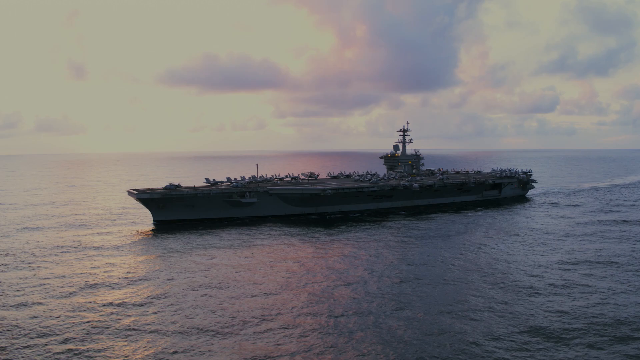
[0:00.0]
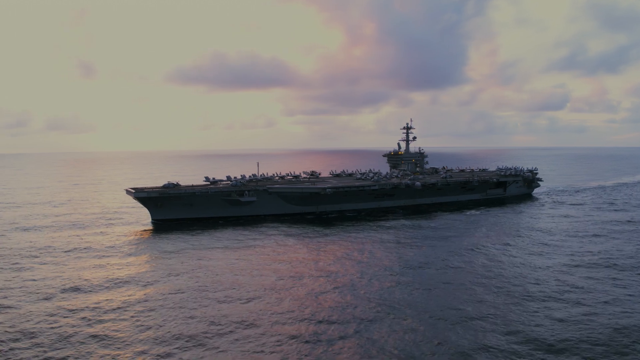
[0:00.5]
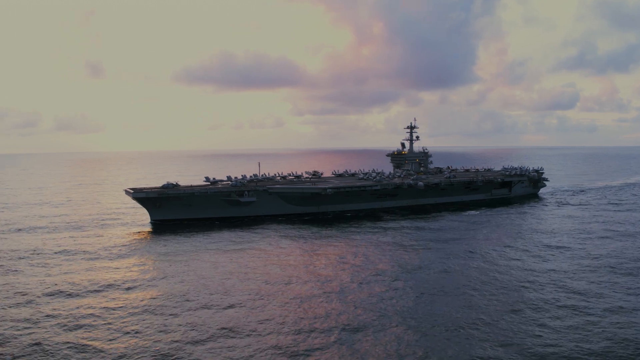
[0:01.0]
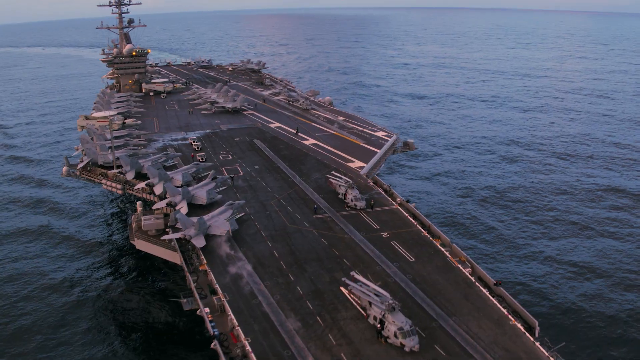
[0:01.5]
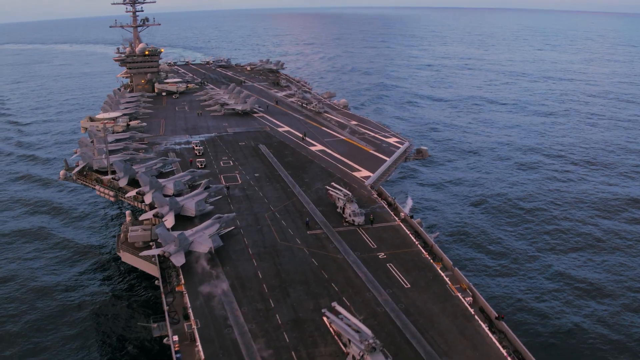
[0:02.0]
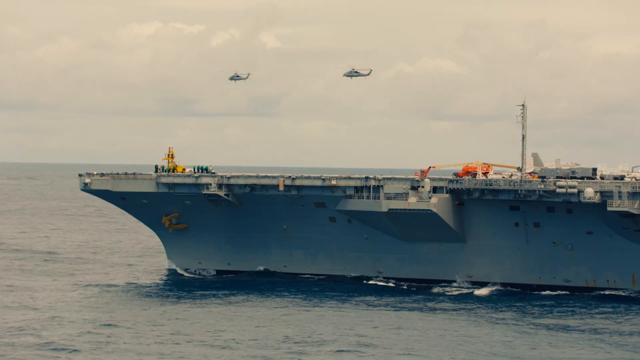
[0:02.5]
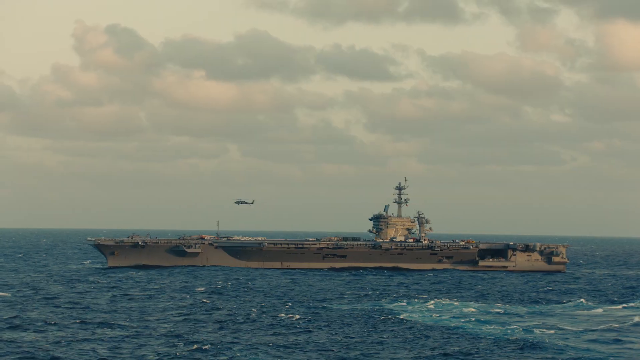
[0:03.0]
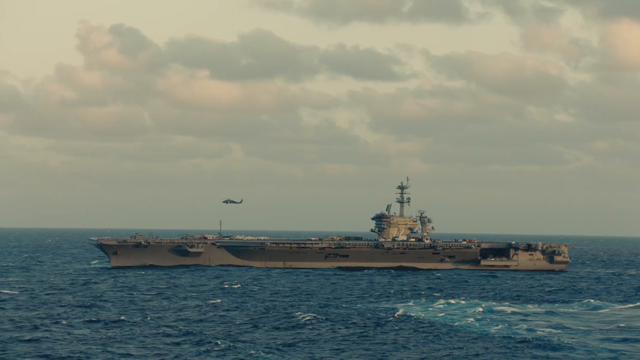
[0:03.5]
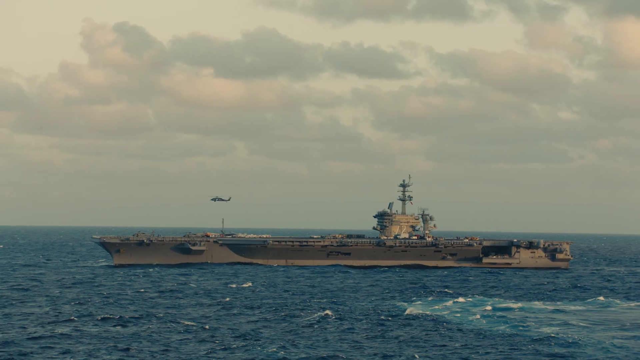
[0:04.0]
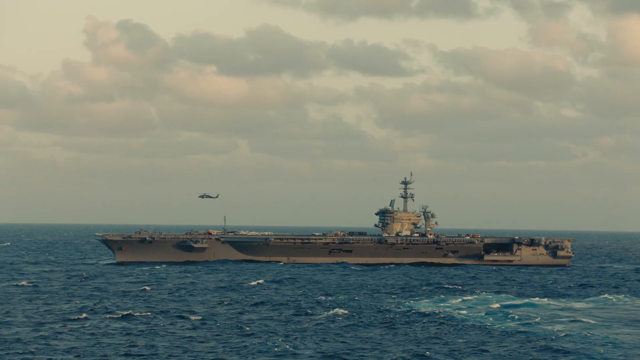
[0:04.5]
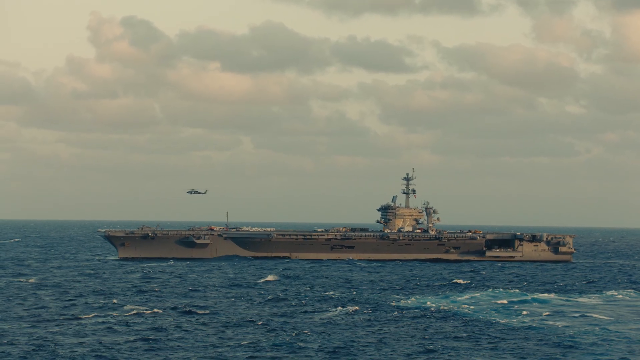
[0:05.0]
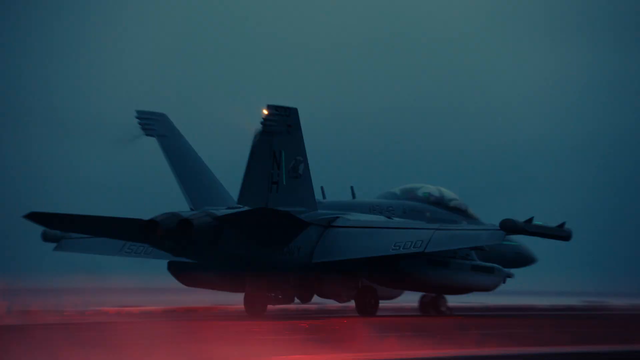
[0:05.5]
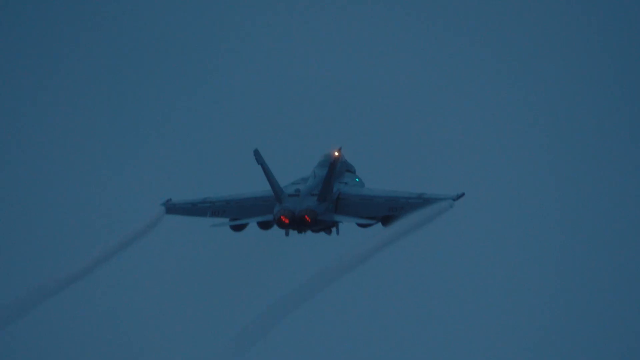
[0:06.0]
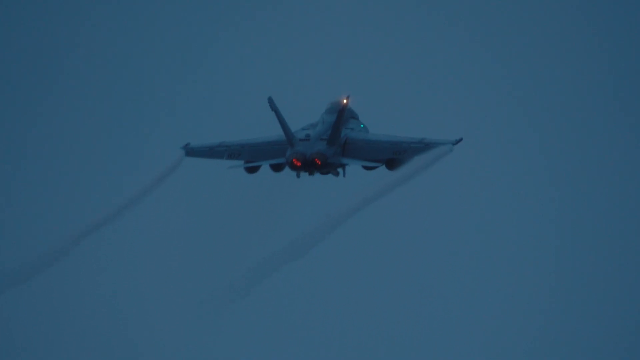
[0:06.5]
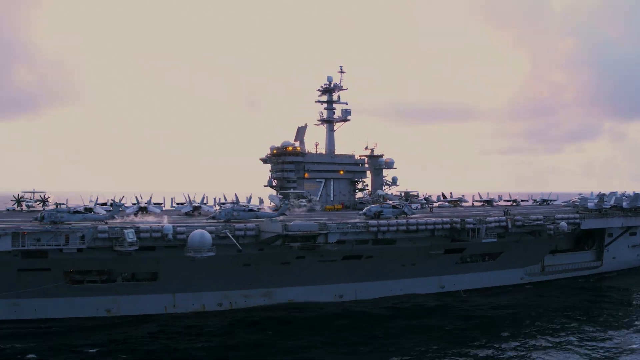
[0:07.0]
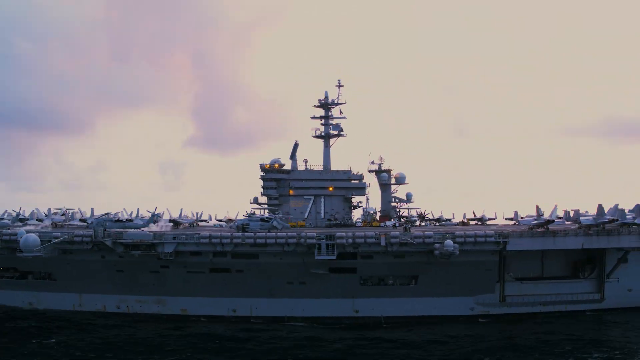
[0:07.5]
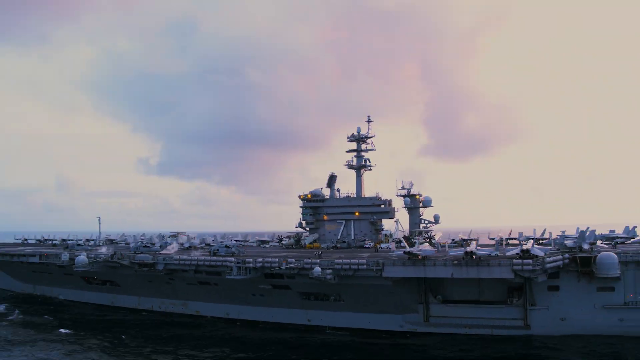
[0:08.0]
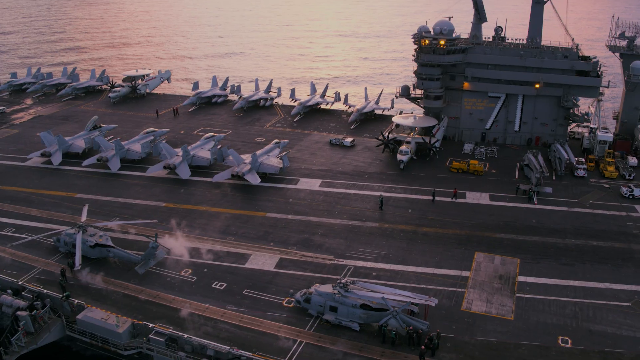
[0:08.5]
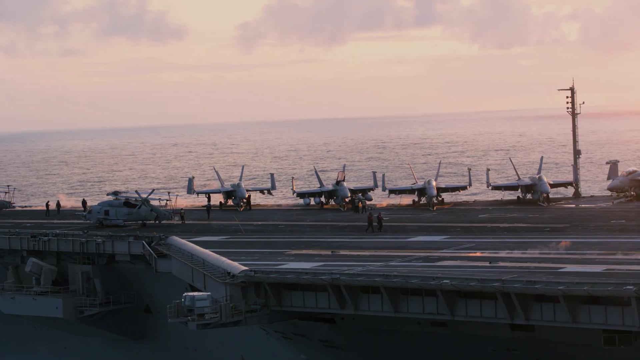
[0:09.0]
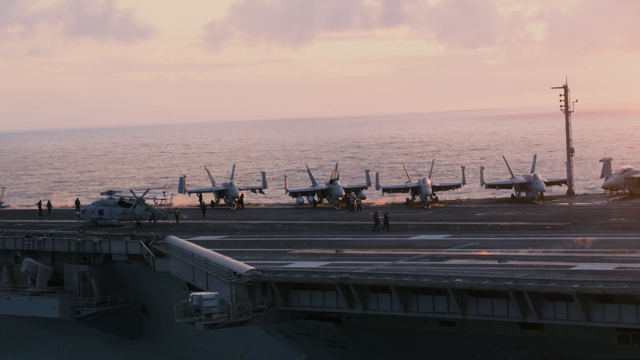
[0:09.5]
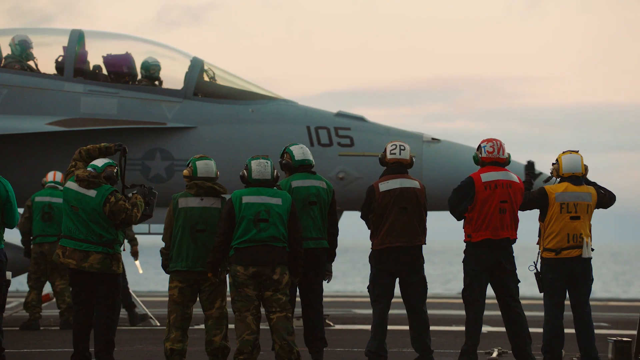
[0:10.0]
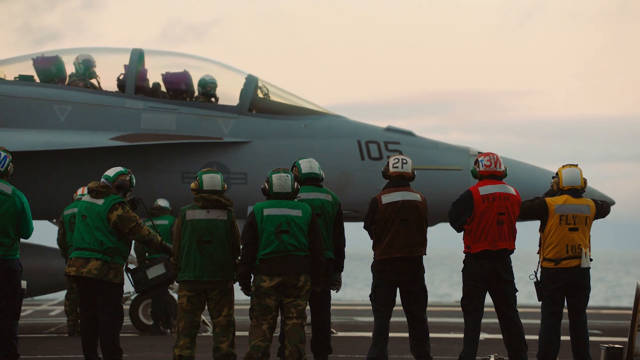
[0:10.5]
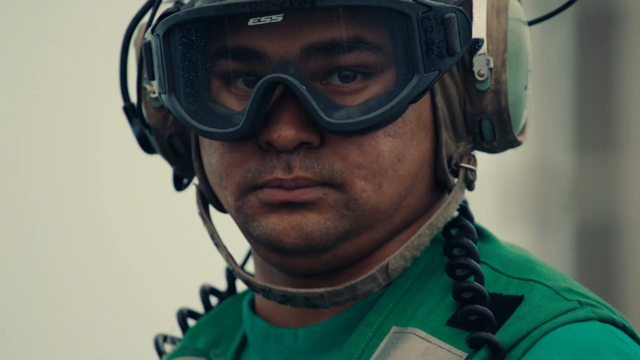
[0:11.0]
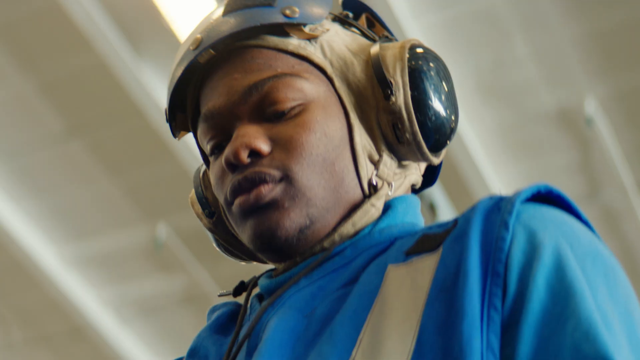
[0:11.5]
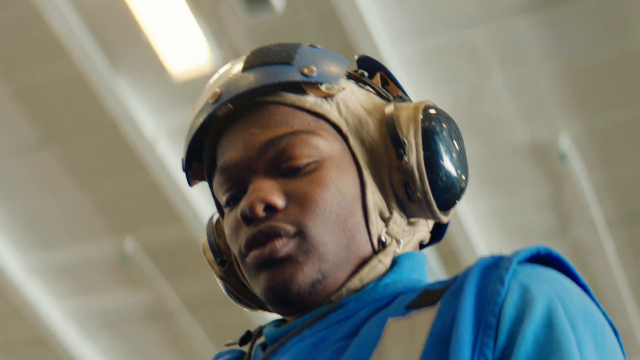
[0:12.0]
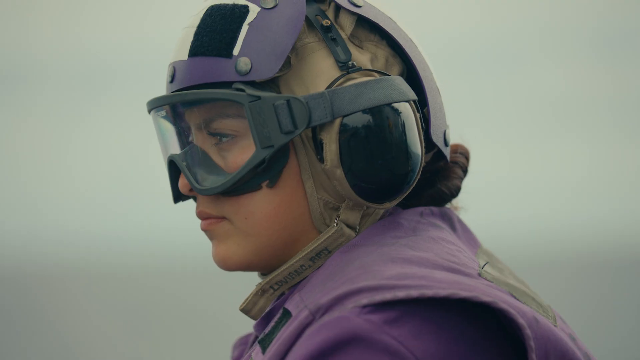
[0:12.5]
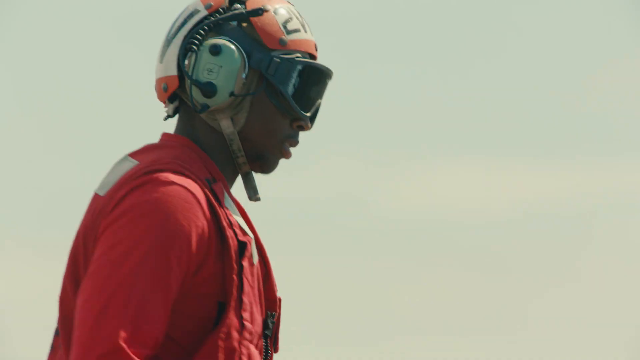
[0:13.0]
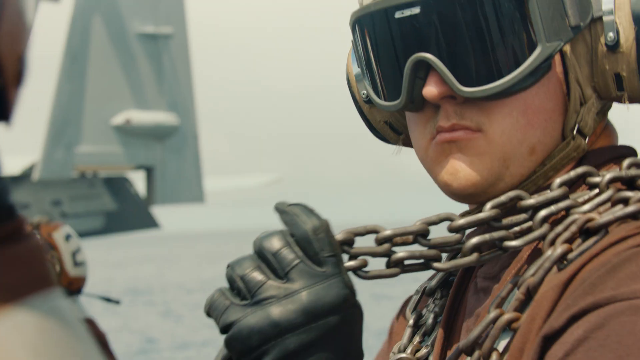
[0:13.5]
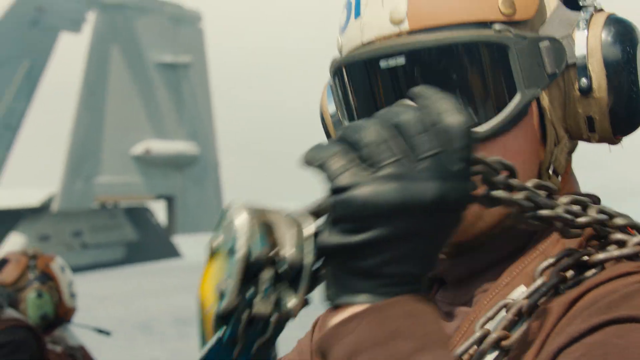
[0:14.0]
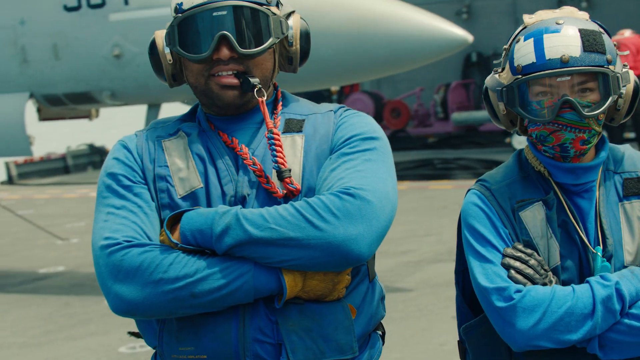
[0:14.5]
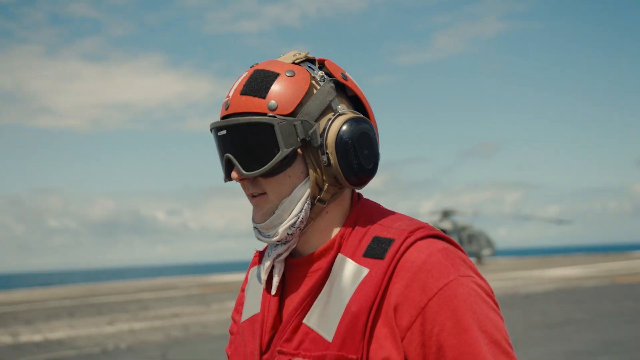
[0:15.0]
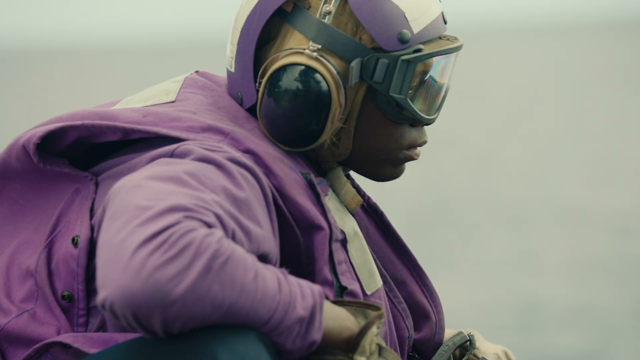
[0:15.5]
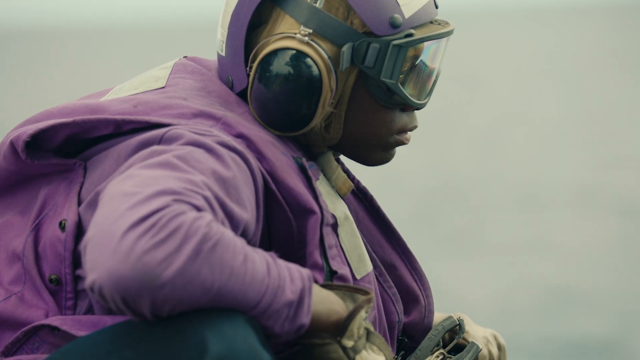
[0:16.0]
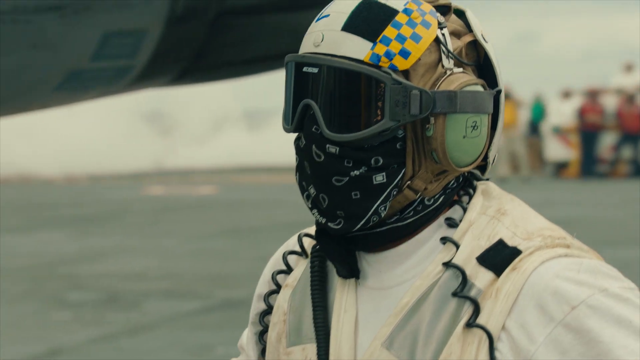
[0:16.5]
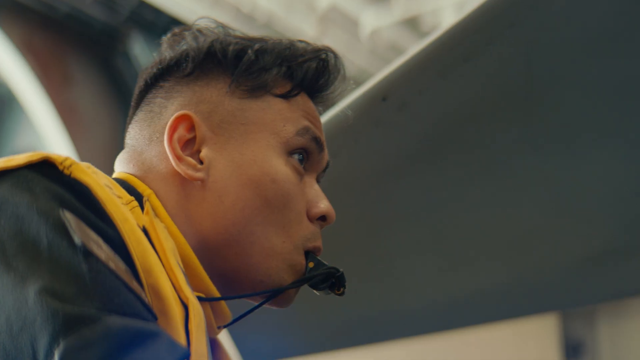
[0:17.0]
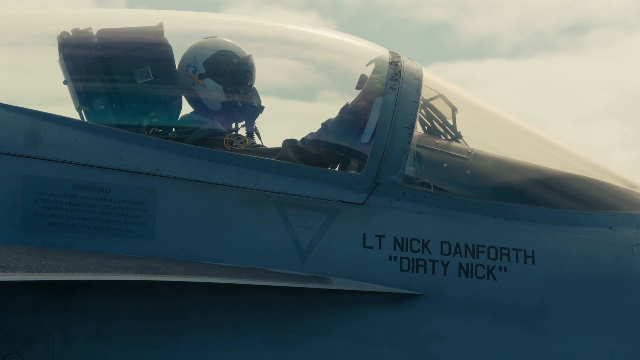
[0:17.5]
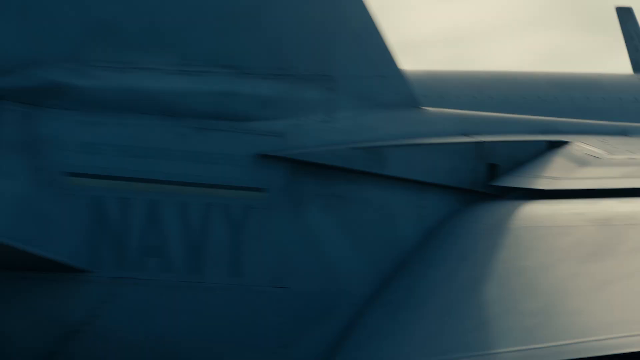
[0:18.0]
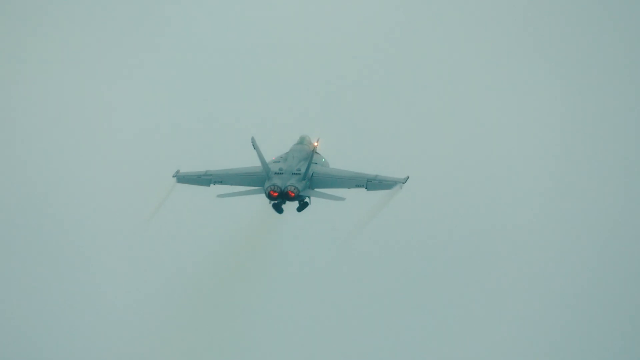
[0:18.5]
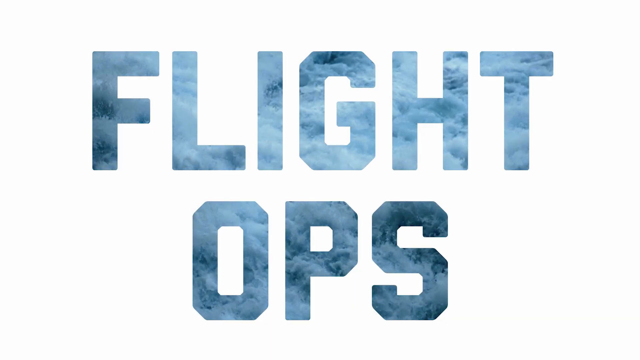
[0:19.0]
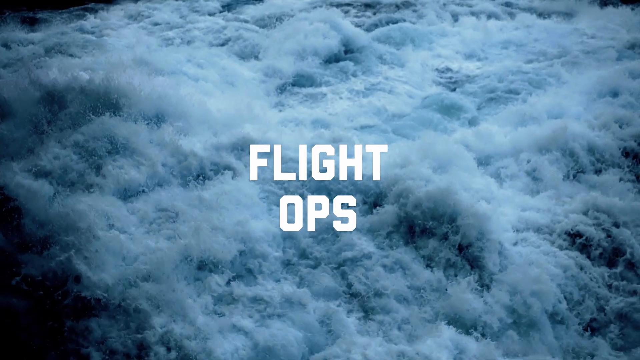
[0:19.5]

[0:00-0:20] The video opens on a wide view of a large ship at sea during sunset, with the pink clouds reflected on the water around it. It shifts to a close-up, kind of drone-like view over the top of the ship, where what look like small planes are parked mostly along the left side, with some lanes at the top. Very rapid-fire images of the ship during the daytime follow; one plane takes off toward the right side of the screen over the top of the ship. The view quickly zooms into the plane flying through the air, then shifts to an overview of the deck, this time with planes all around it and sunset colors. A couple more images cycle by rapidly, now showing some people on the deck where the planes are taking off. A close-up shows the backs of a line of people standing in front of a plane with two pilots in it. Everyone wears a vest with a white vertical stripe along the top; some vests are green, and there is one purple, one red and one yellow. Close-ups then show several of these people from the shoulders up, wearing goggles and headsets, cycling through many of them before quickly showing a flight taking off. This is replaced by a white screen with the words "Flight Ops" in the center, with a flashing effect on the text.